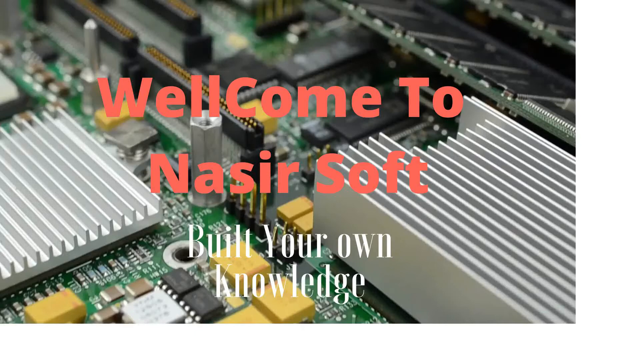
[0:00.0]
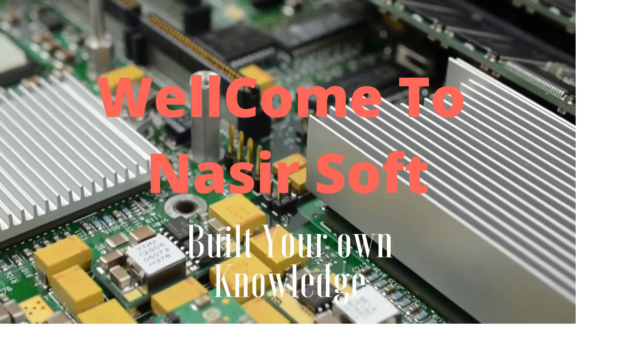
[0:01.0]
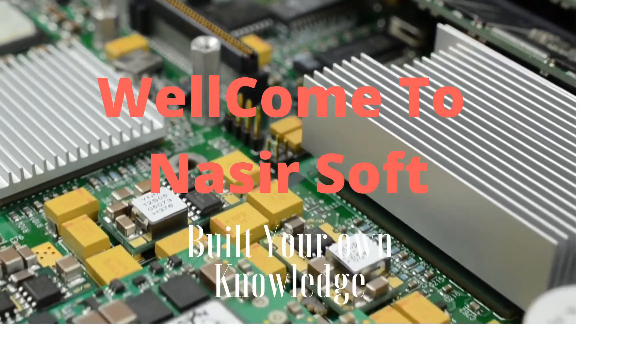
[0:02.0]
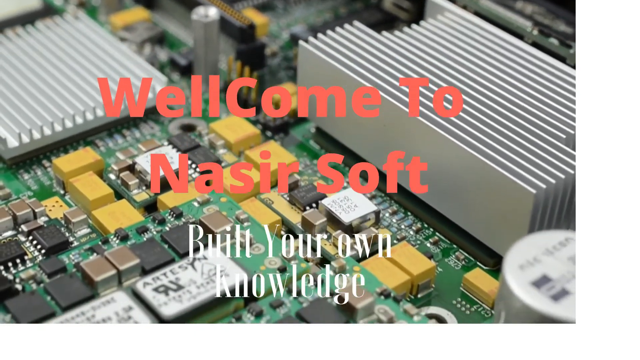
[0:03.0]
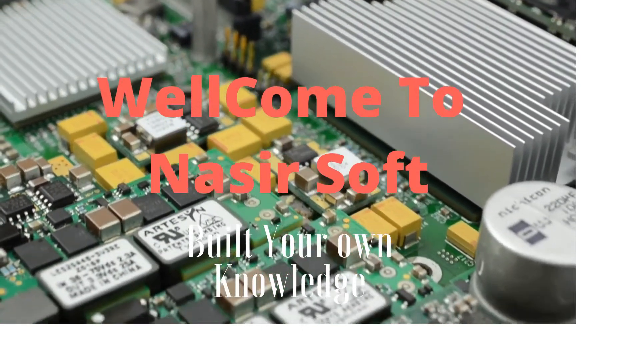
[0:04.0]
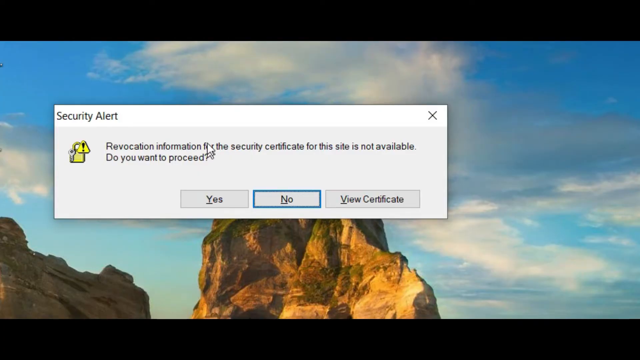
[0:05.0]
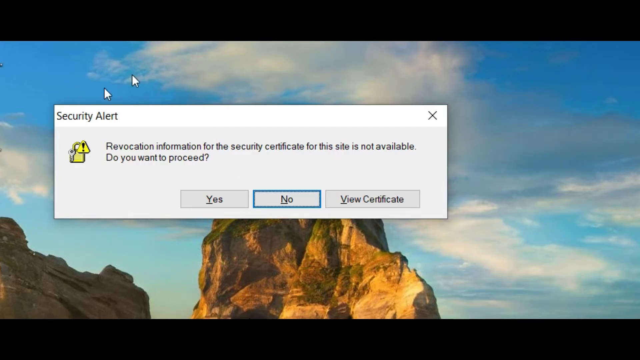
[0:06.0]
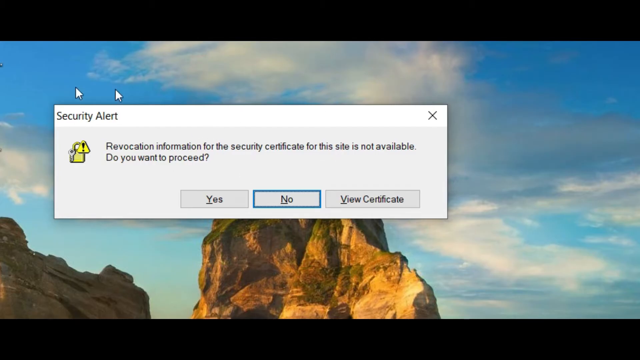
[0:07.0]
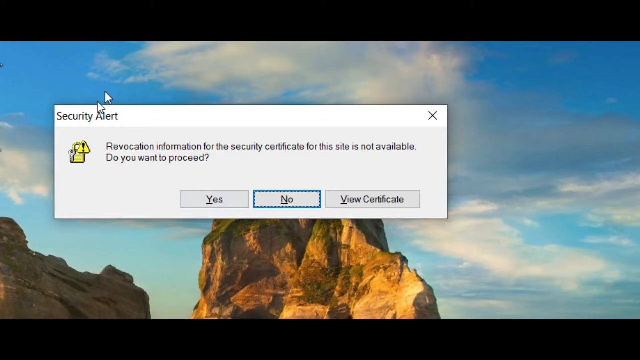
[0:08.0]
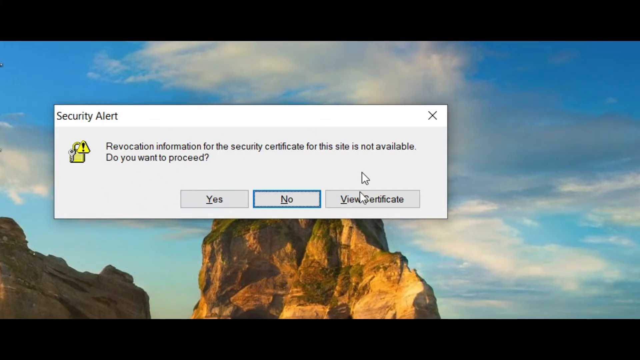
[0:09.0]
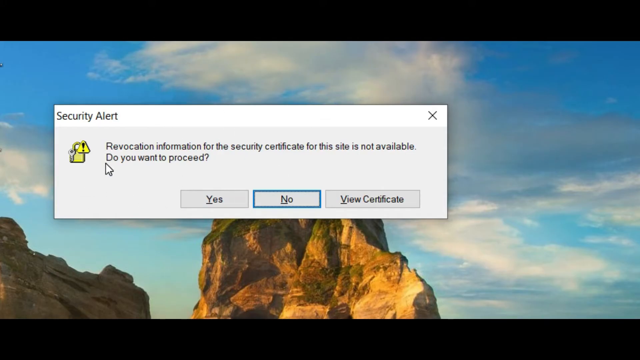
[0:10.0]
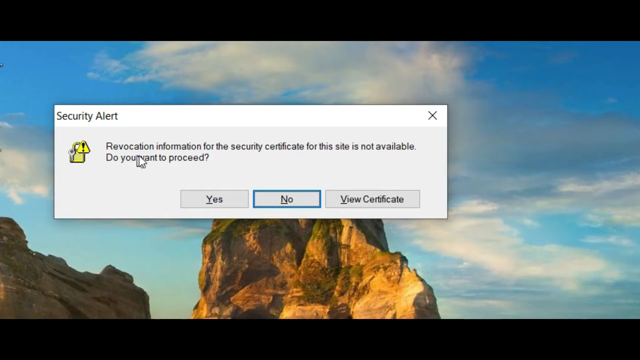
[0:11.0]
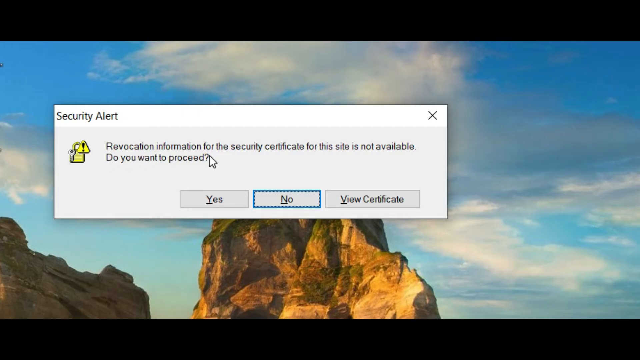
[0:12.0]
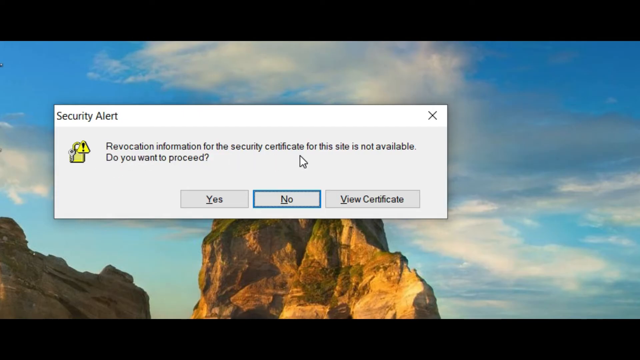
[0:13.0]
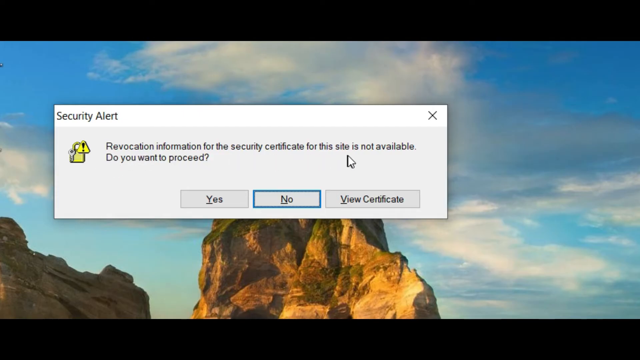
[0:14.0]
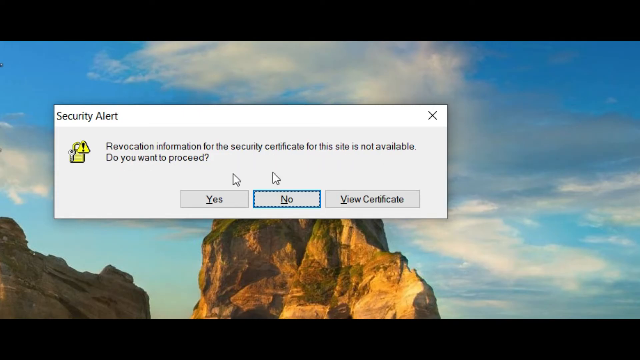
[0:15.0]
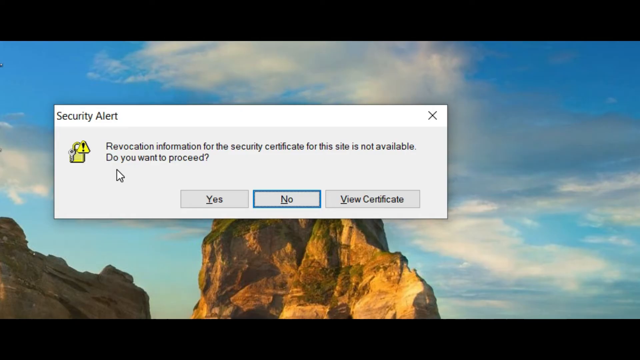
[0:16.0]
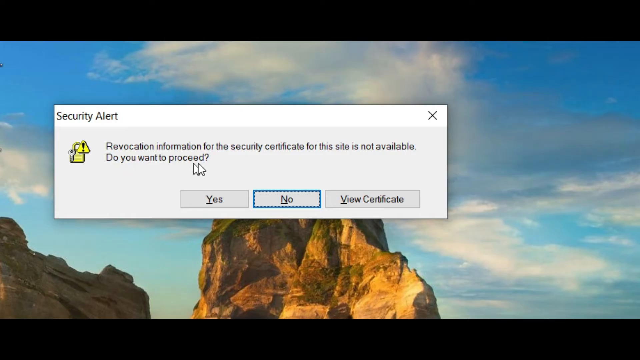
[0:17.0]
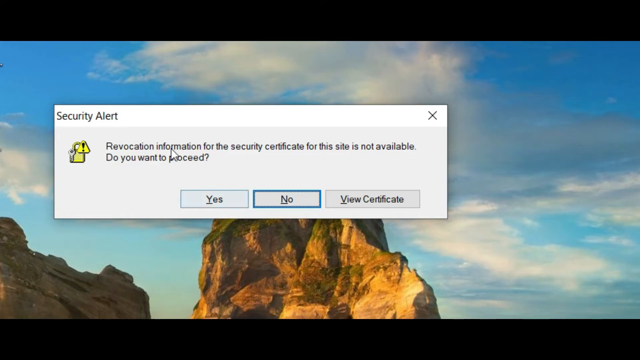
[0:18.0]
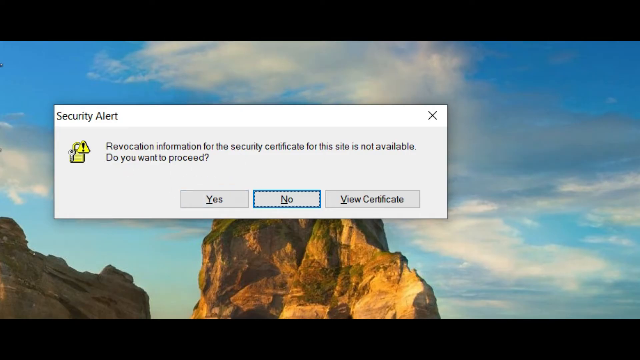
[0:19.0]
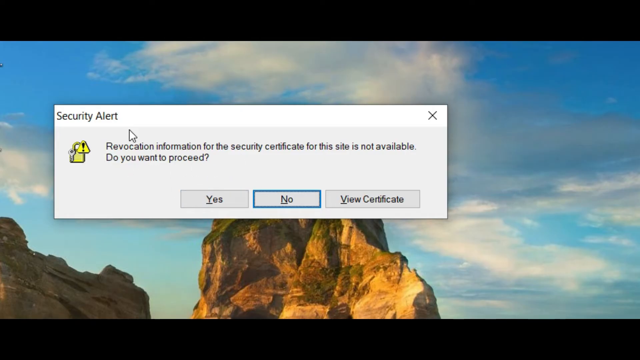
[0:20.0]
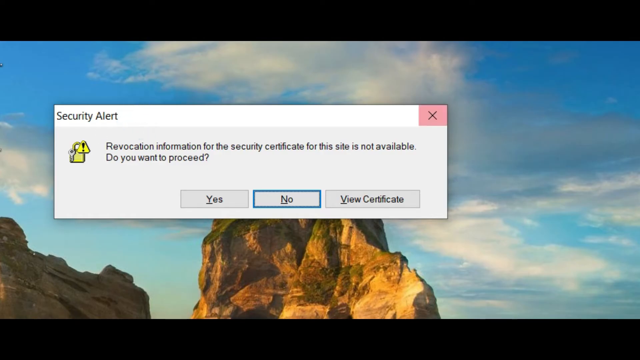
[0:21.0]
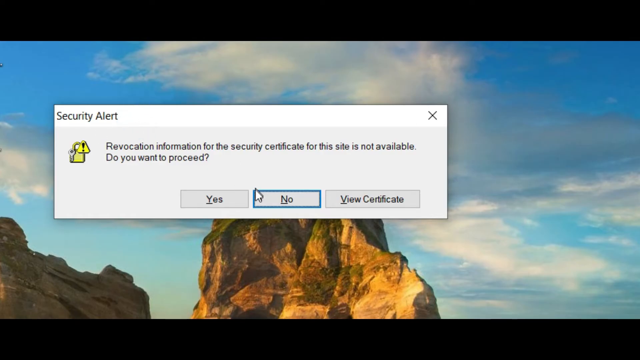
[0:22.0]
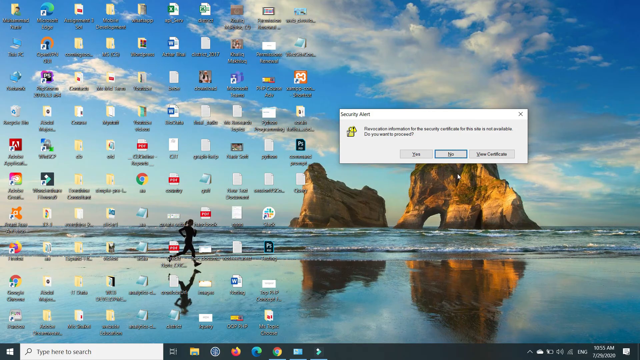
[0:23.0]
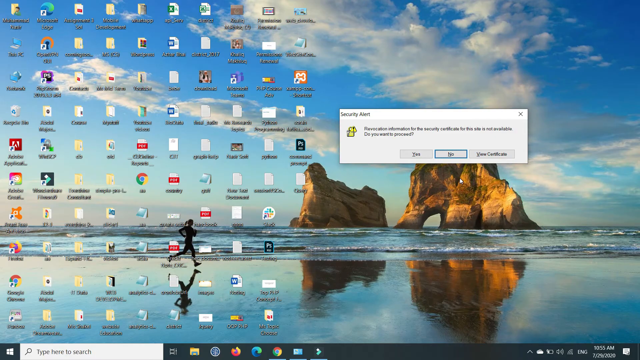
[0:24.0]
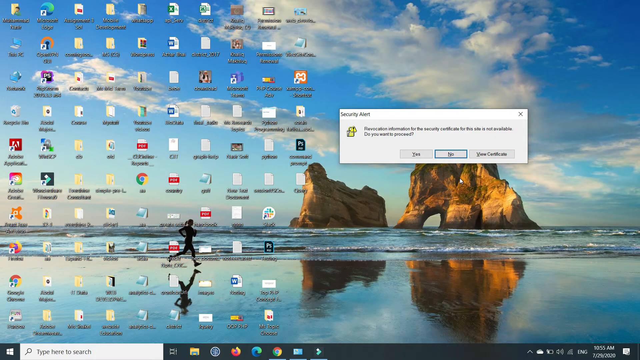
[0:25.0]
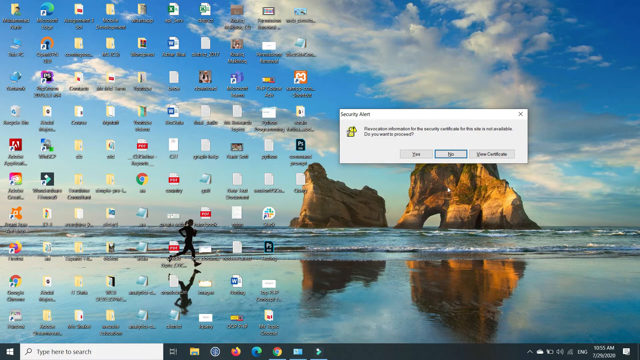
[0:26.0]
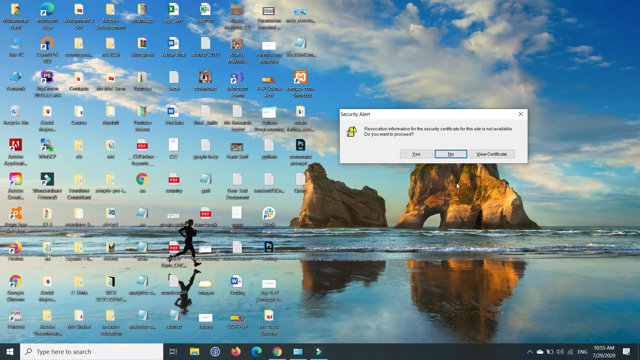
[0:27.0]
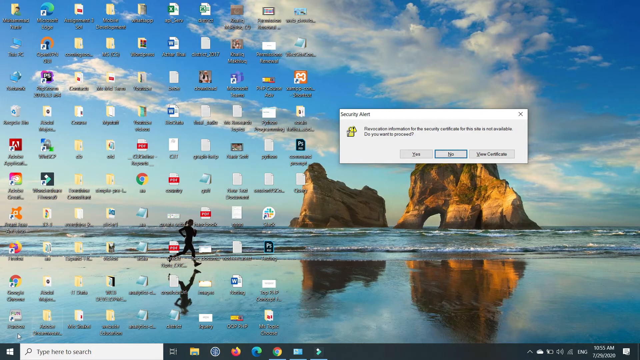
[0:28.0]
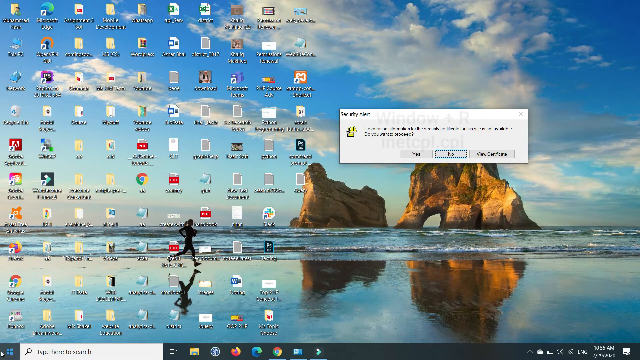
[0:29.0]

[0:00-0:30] An explainer video opens with a title on the screen that reads "Welcome to Nassir Soft, build your own knowledge," set against a background showing the inside of a computer. The screen then switches to a pop-up security alert in the middle of the screen that reads "Revocation information for the security certificate for this site is not available. Do you want to proceed?" with options to select yes, no, and view certificates. The mouse pointer moves across the screen as the alert is read, then goes down and clicks to exit the security alert, returning to the desktop of the operating system. More instructions follow. The video apparently concerns computer knowledge.